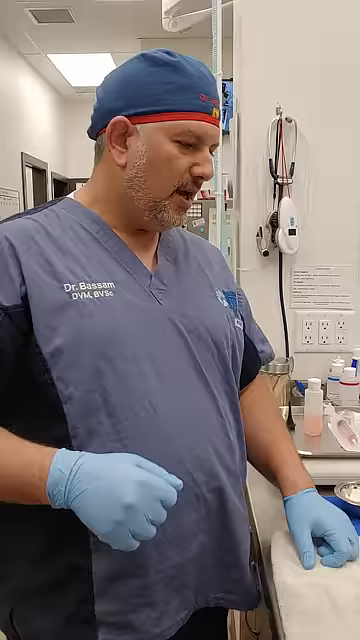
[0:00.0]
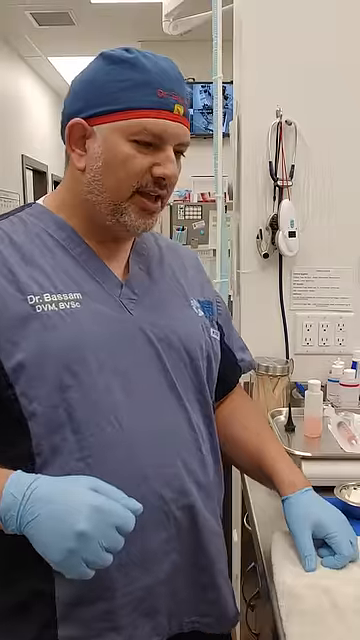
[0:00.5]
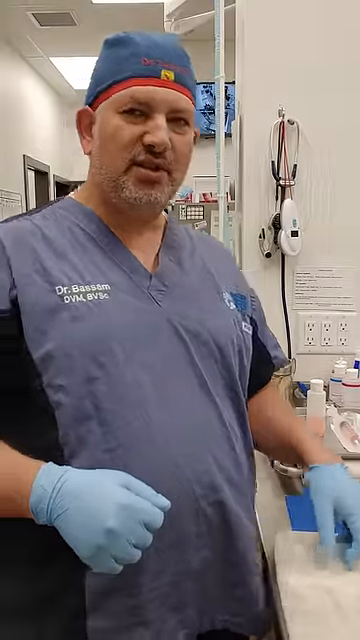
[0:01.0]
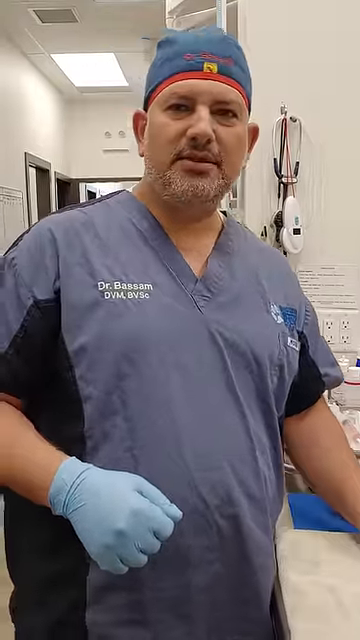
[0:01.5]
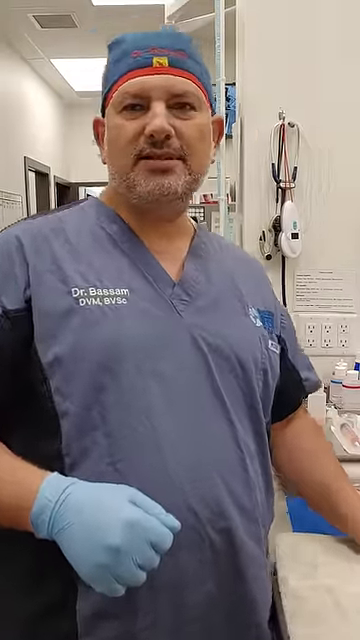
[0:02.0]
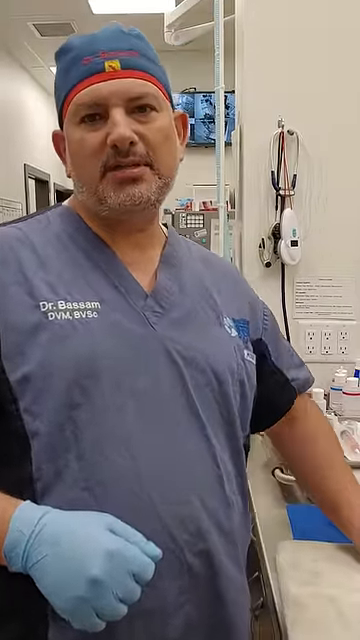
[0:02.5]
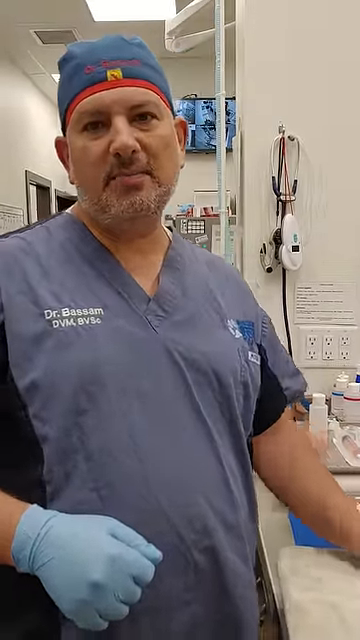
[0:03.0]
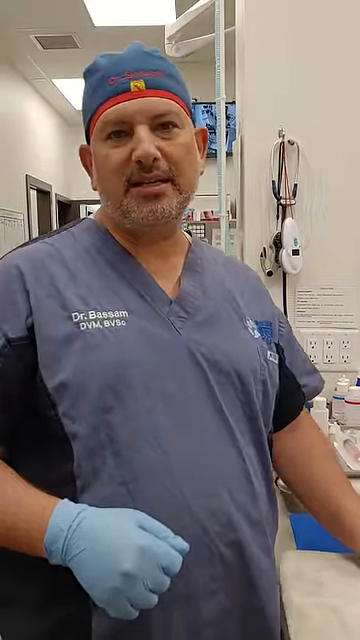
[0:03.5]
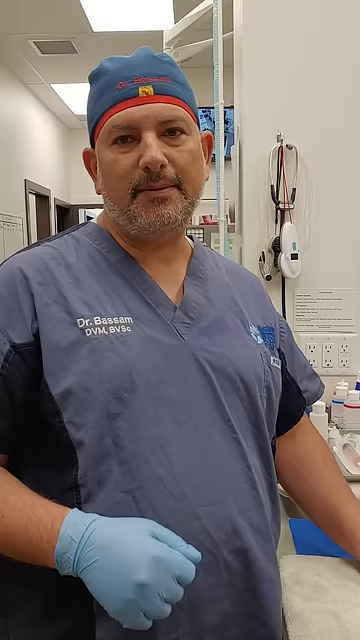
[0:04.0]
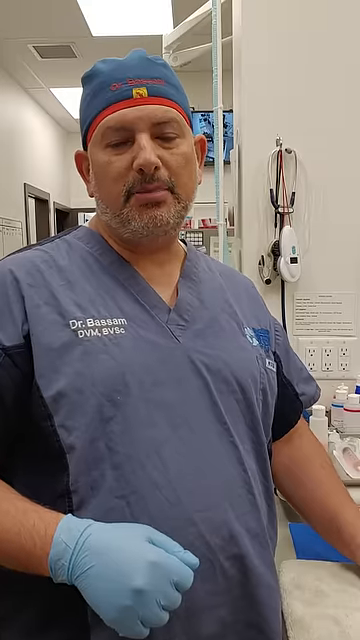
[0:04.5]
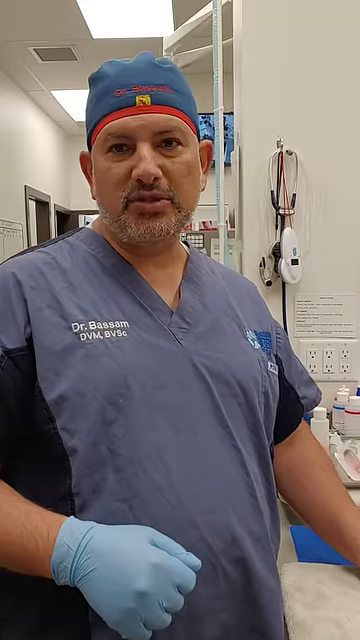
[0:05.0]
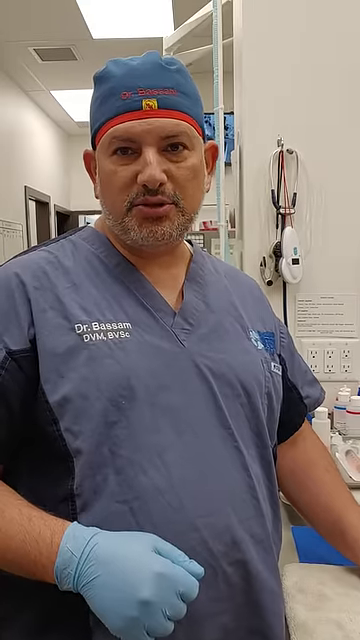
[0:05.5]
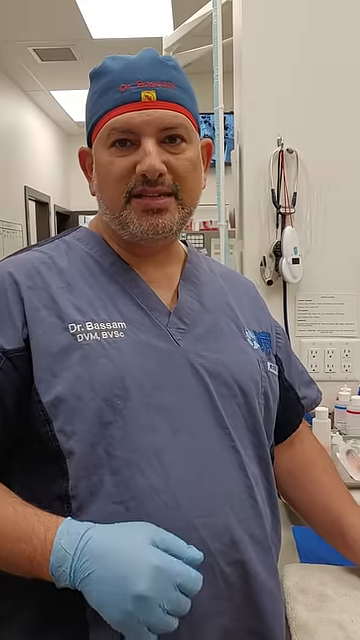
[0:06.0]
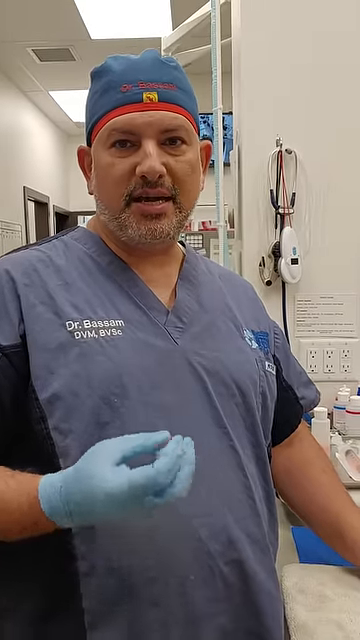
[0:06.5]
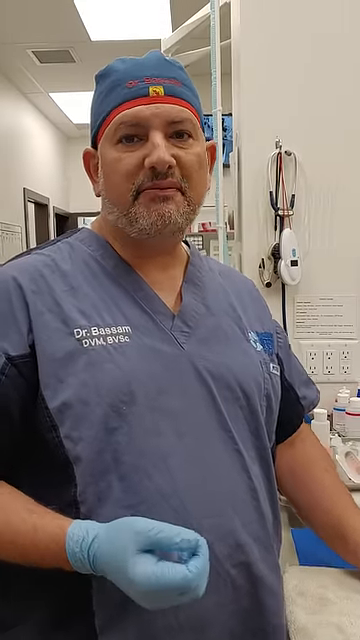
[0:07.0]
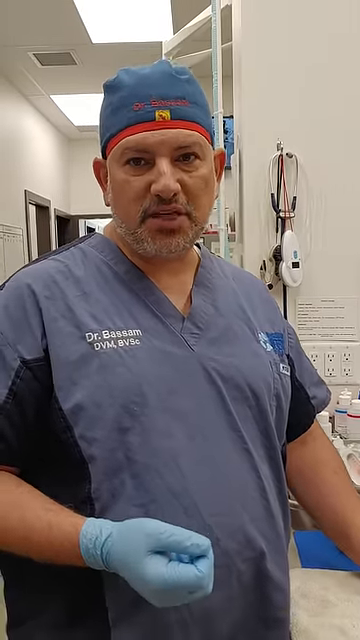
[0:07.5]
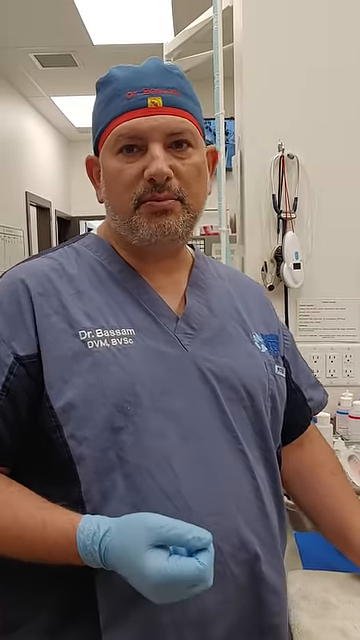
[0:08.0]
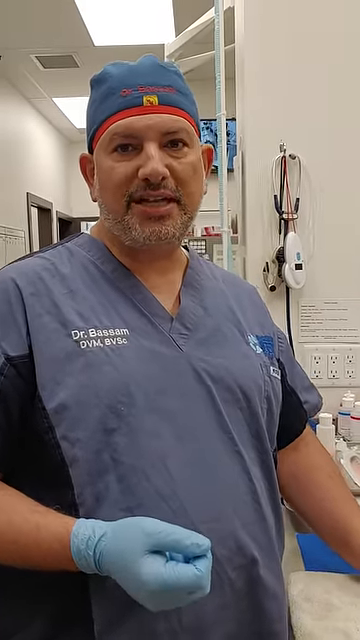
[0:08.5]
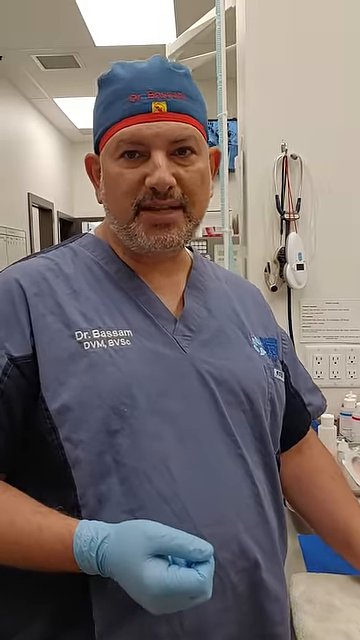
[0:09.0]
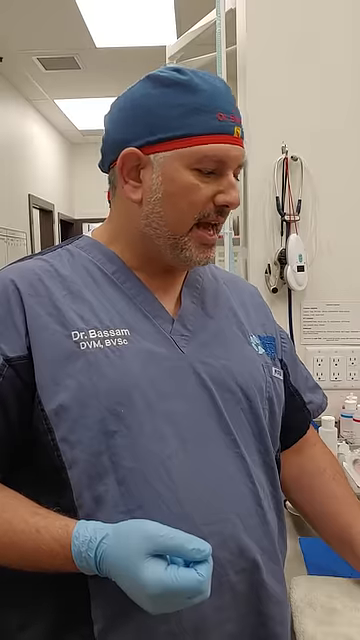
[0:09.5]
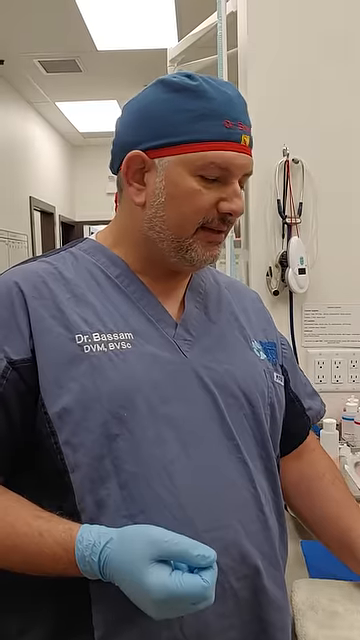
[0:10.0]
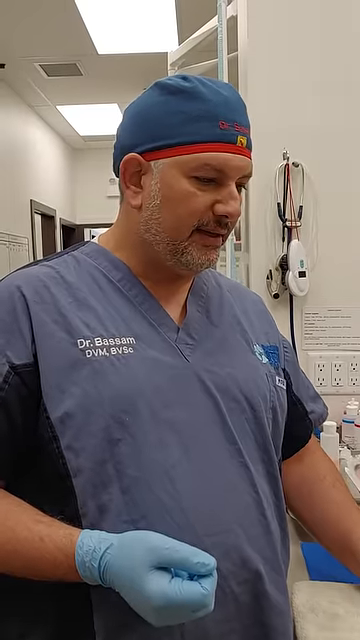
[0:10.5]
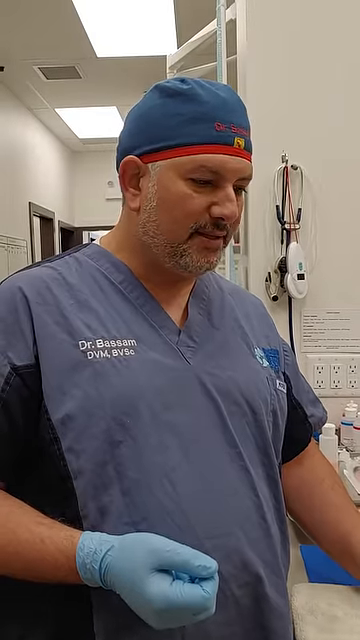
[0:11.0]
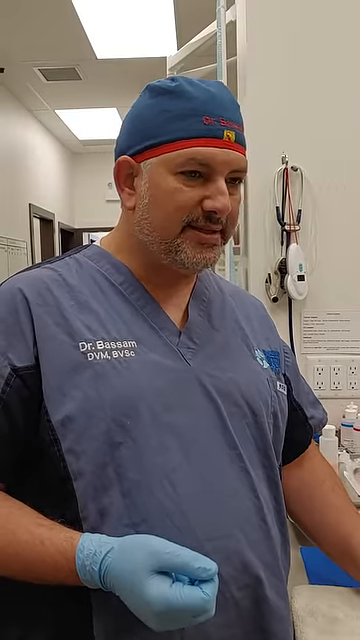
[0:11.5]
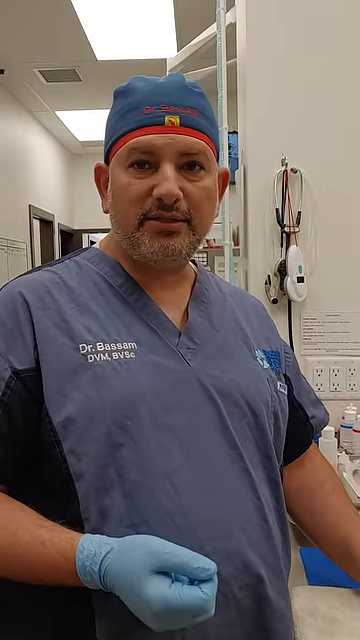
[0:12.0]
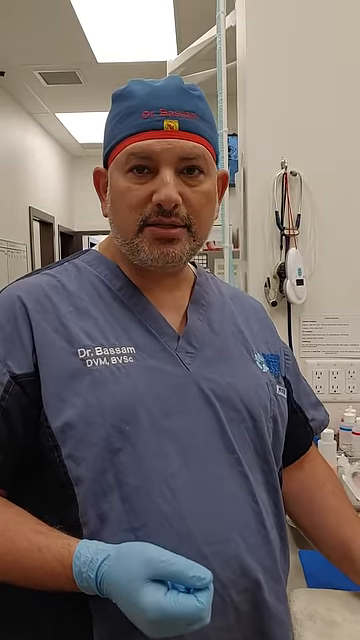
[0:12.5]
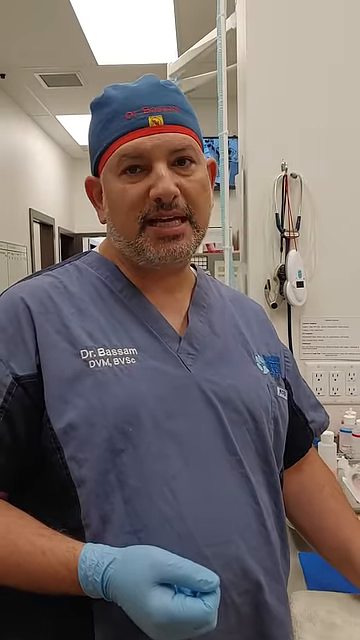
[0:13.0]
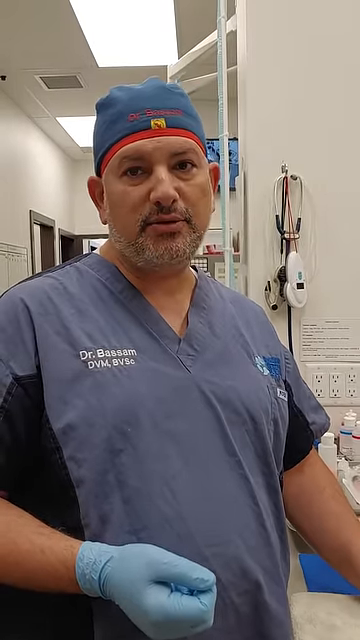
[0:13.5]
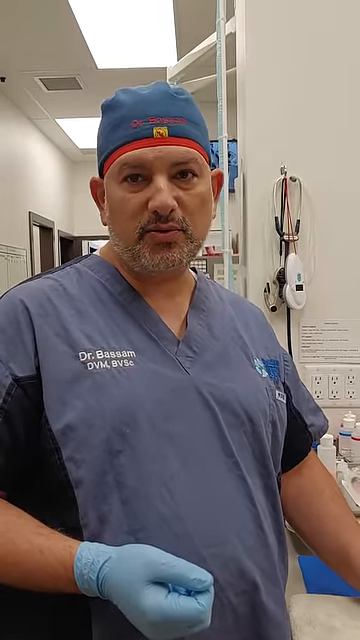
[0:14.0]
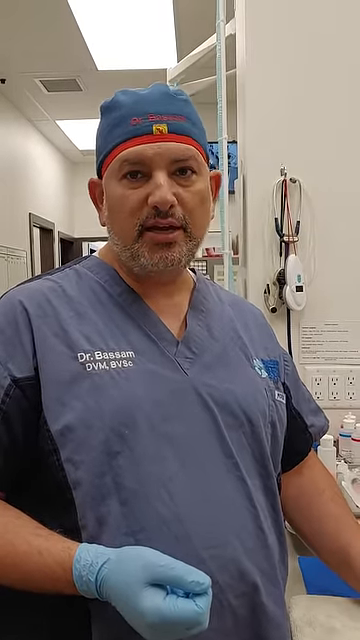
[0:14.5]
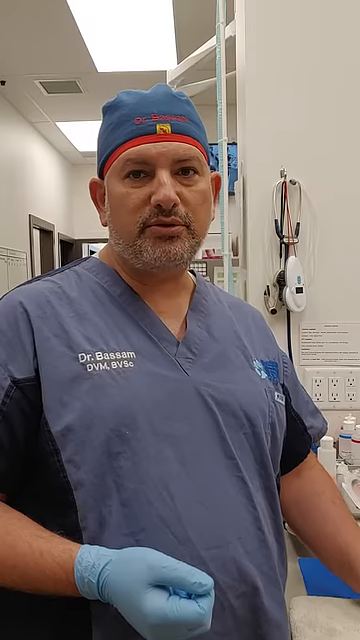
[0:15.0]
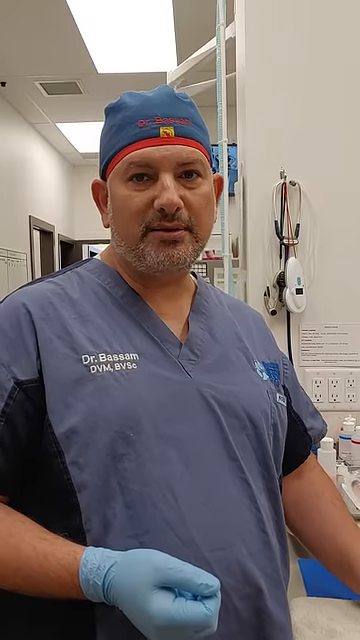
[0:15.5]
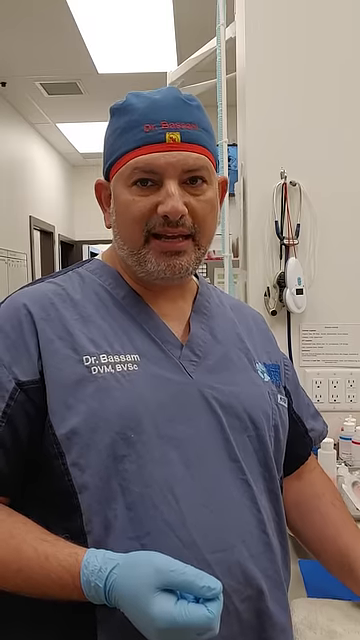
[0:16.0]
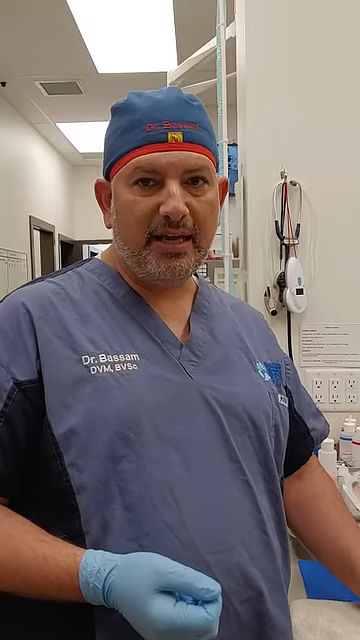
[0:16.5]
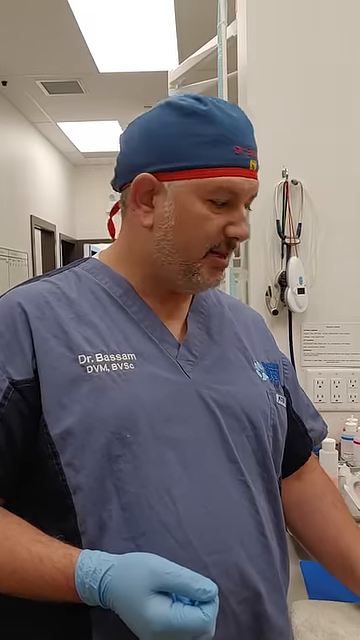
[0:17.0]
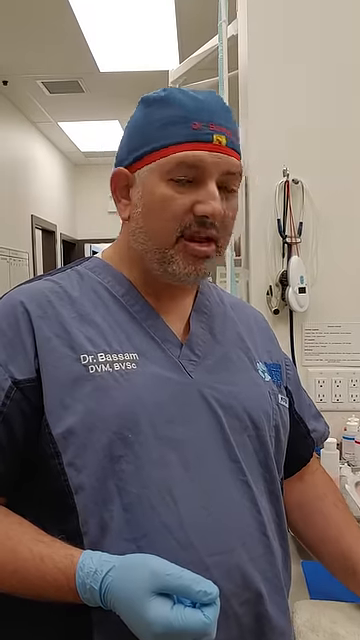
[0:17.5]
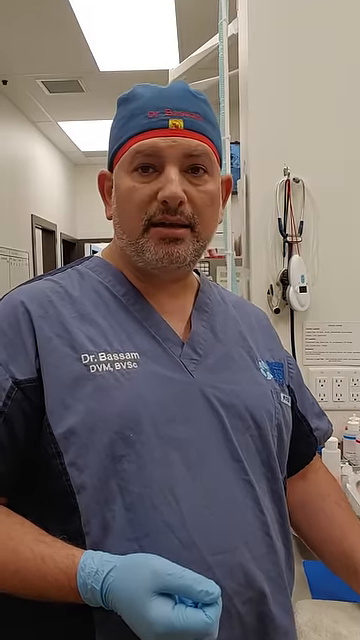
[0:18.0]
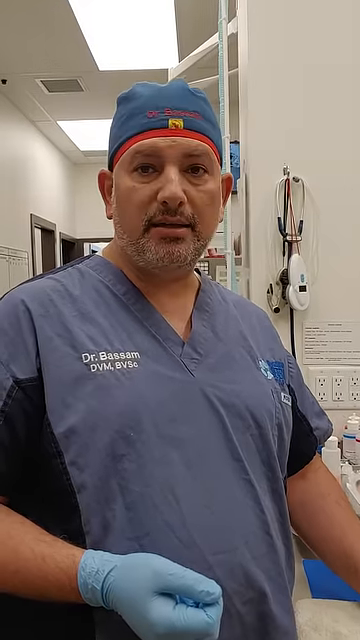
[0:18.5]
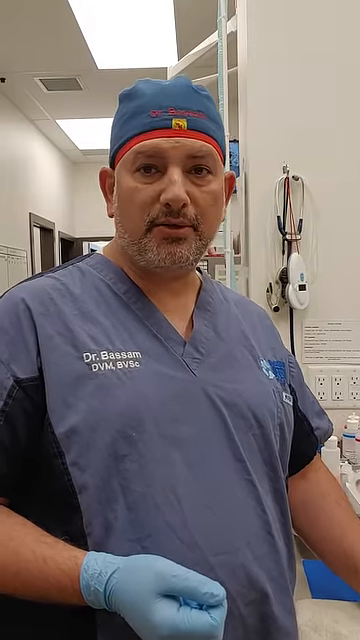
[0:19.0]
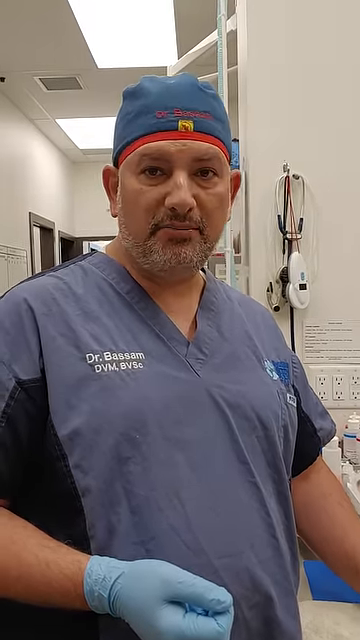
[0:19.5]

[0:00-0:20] A man stands in a surgical area. The front of his scrubs shows "doctor" followed by a last name that starts with a B; the rest is too blurry to make out. He wears a blue hair cap with red trim over his hair and blue rubber gloves, and he has white and gray facial hair. A stethoscope and various other items hang in the background to his right. As he stands, he talks to the camera, emphasizing something with his words. Fluorescent lights are above him, the walls in the background are mostly beige, and there are about six electrical outlets to his lower right.